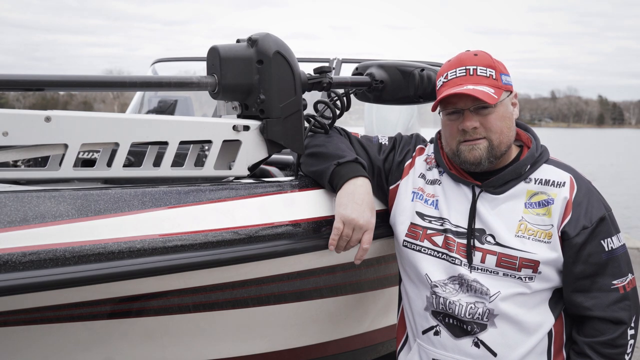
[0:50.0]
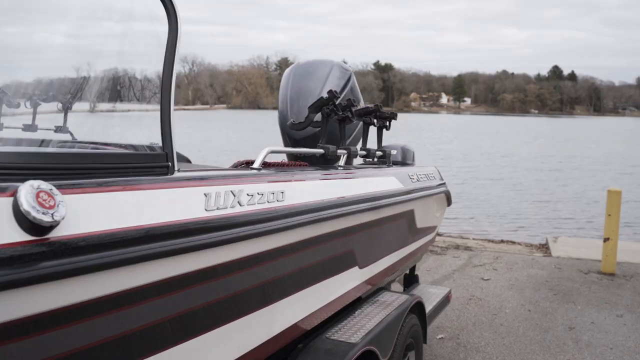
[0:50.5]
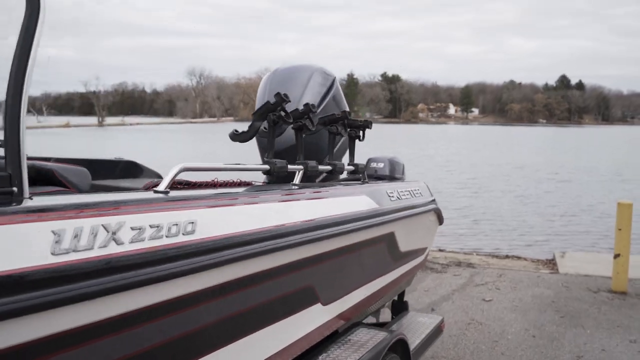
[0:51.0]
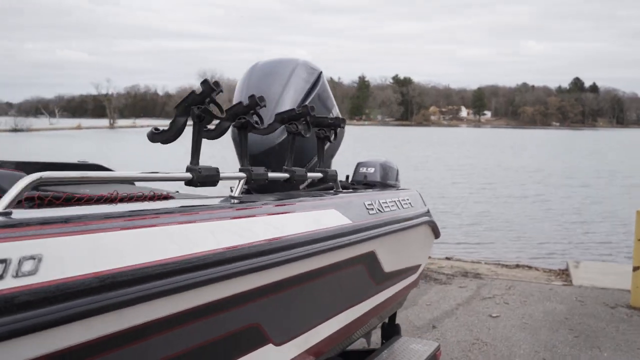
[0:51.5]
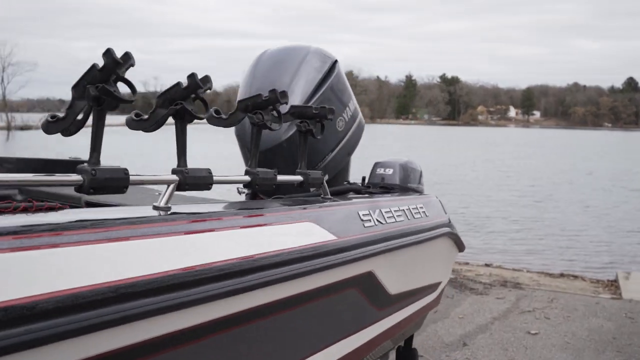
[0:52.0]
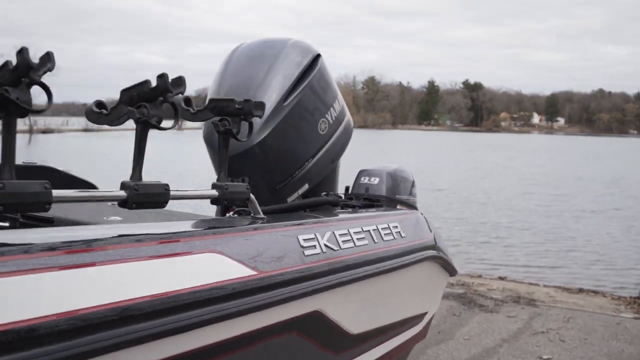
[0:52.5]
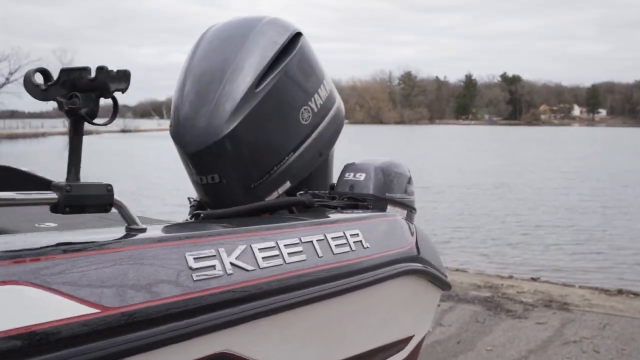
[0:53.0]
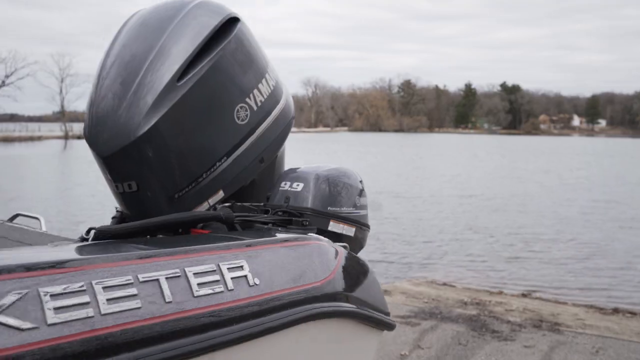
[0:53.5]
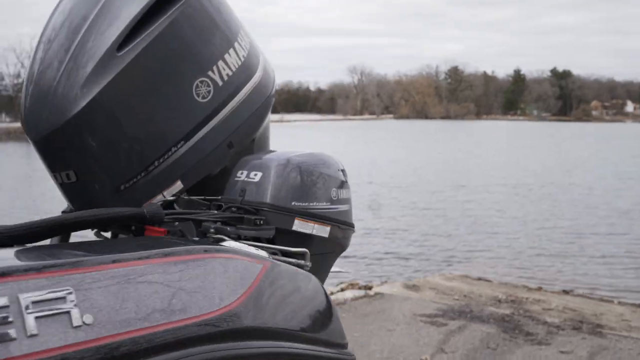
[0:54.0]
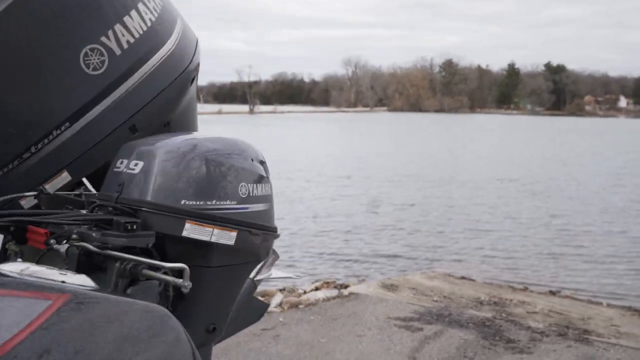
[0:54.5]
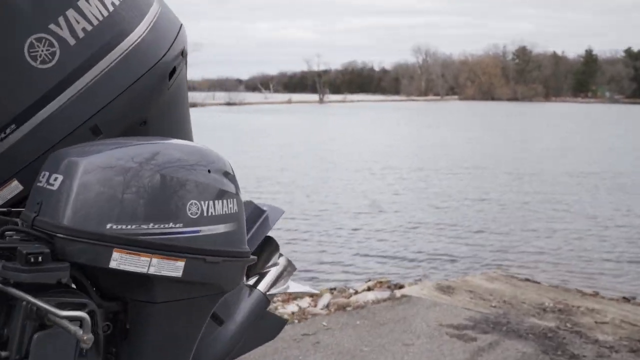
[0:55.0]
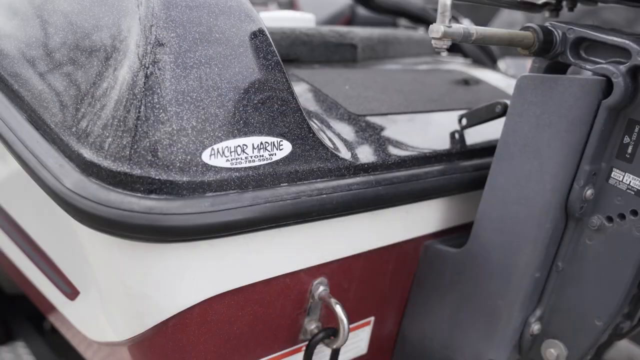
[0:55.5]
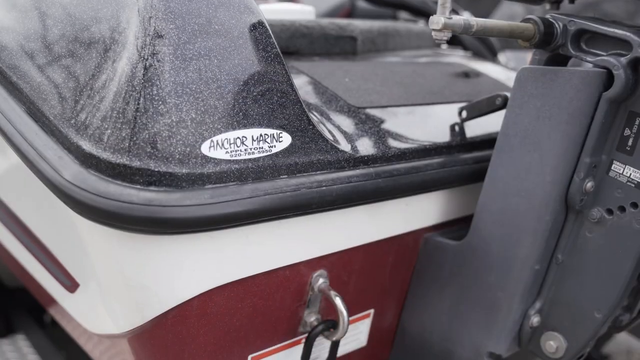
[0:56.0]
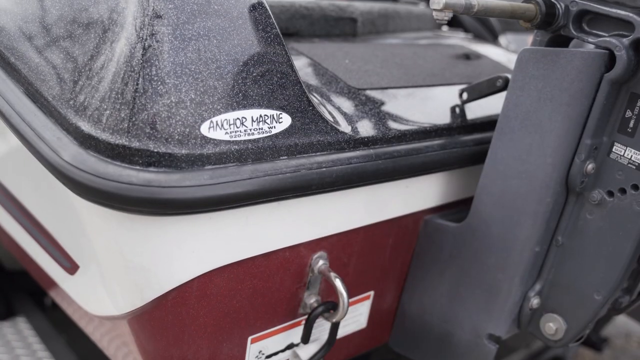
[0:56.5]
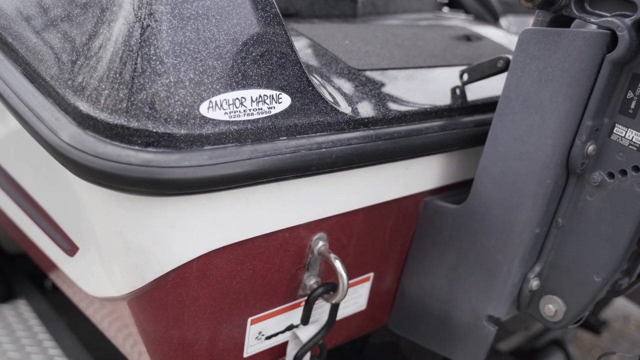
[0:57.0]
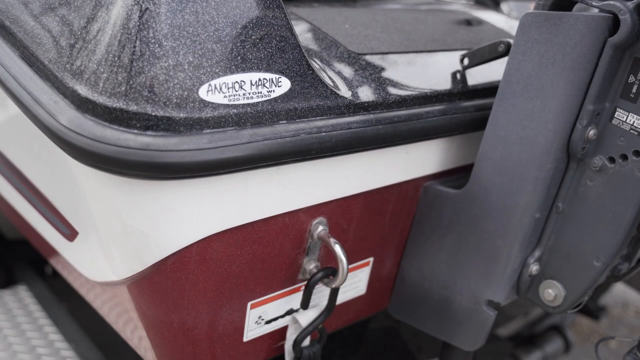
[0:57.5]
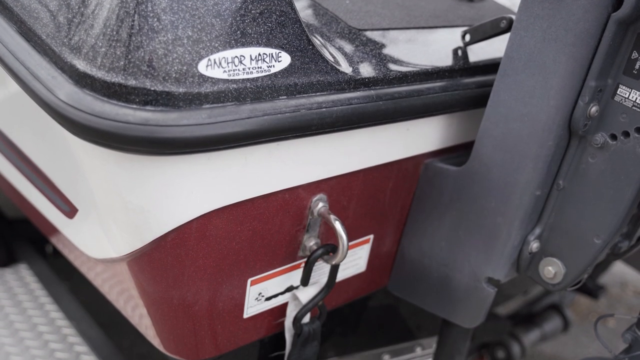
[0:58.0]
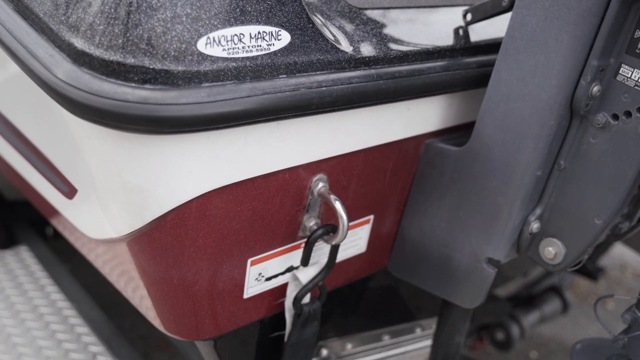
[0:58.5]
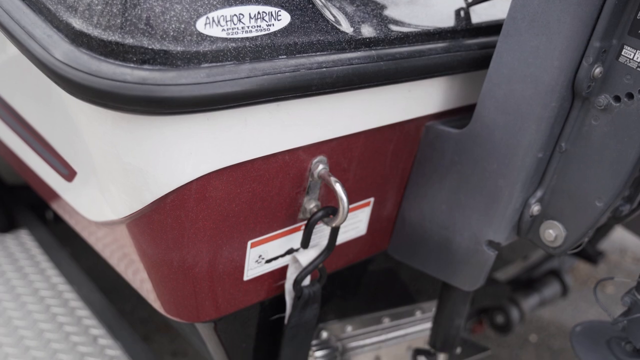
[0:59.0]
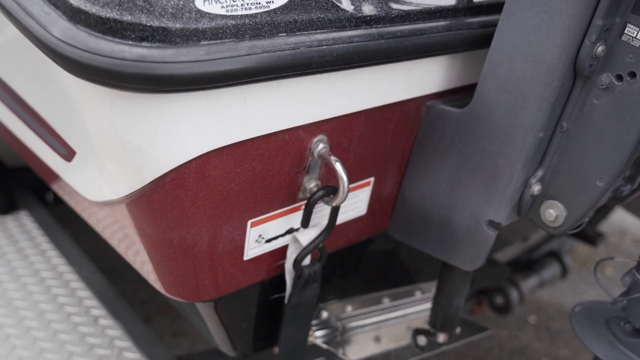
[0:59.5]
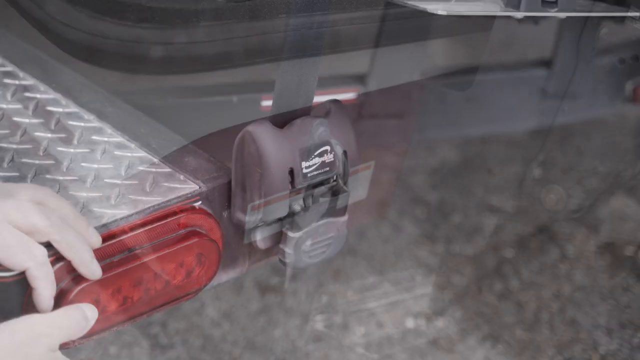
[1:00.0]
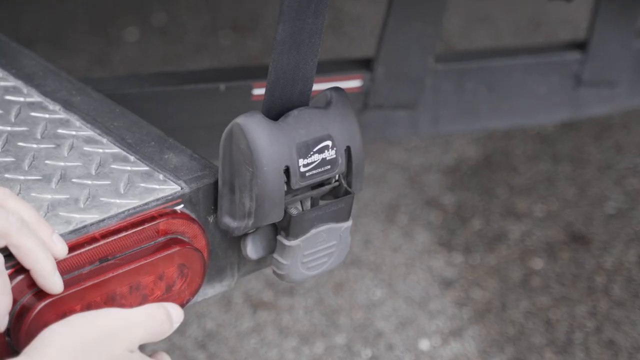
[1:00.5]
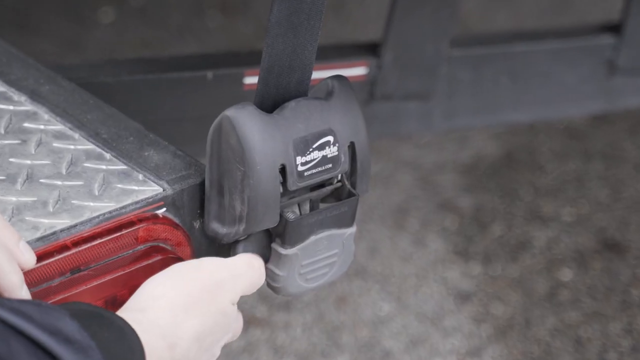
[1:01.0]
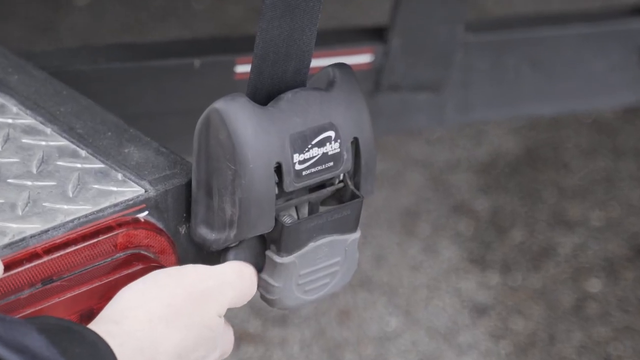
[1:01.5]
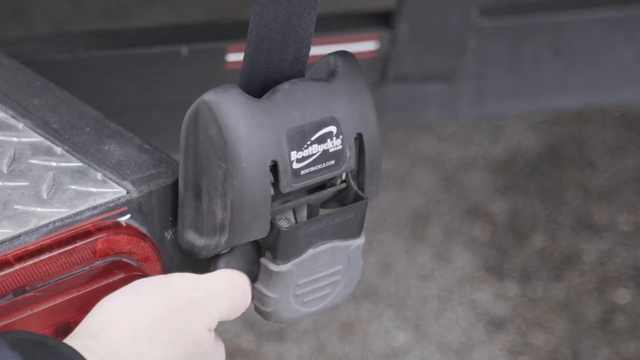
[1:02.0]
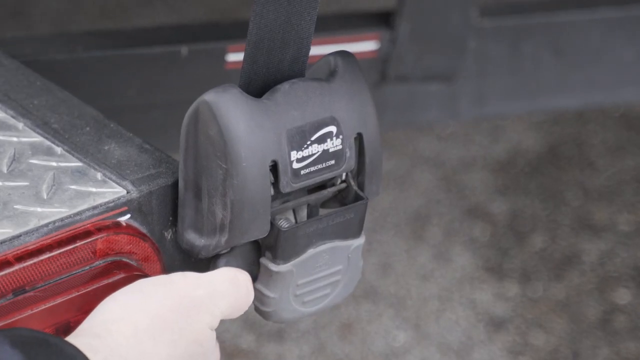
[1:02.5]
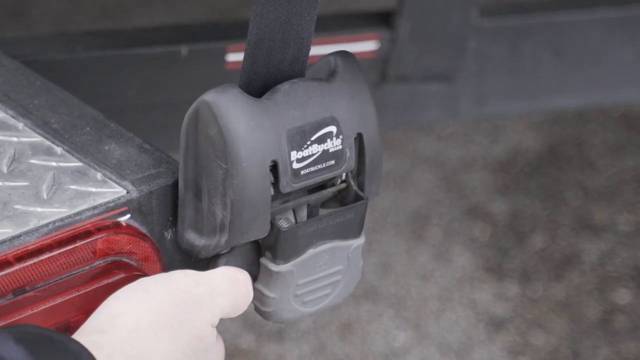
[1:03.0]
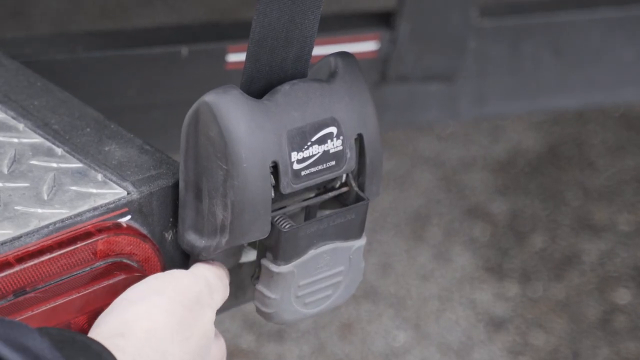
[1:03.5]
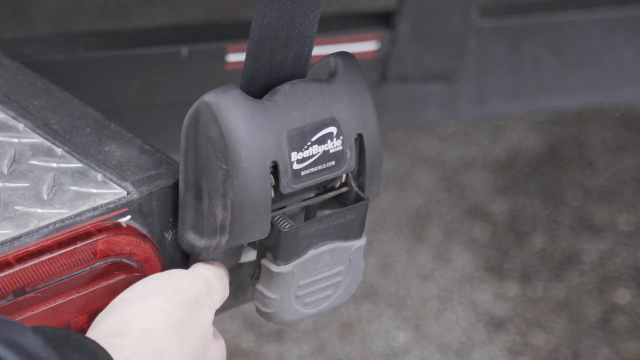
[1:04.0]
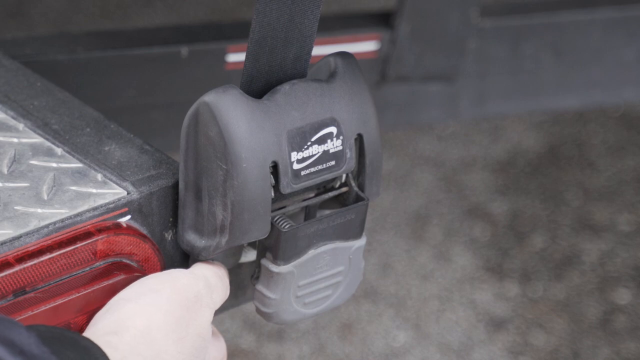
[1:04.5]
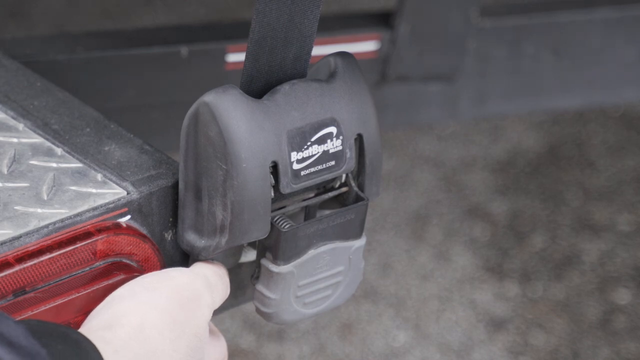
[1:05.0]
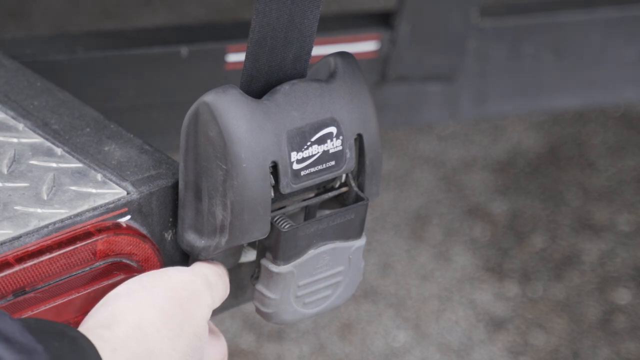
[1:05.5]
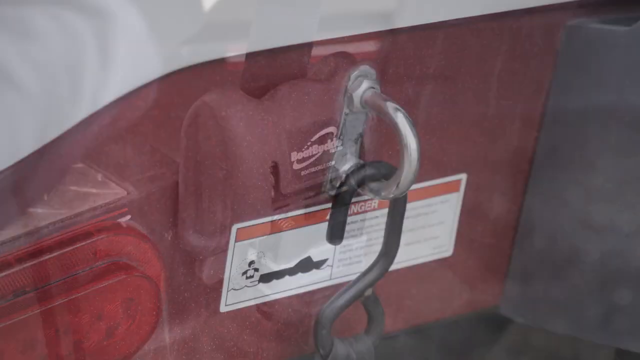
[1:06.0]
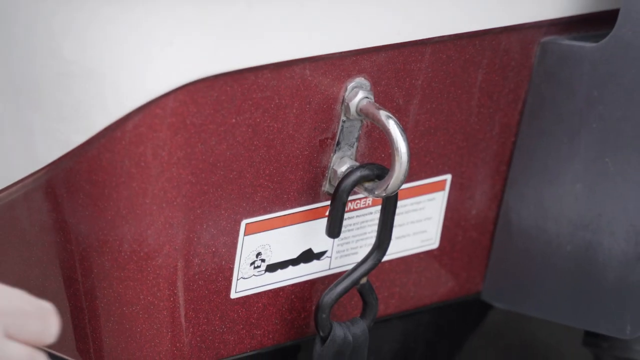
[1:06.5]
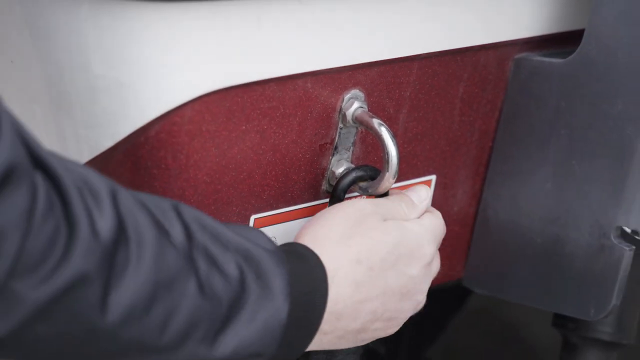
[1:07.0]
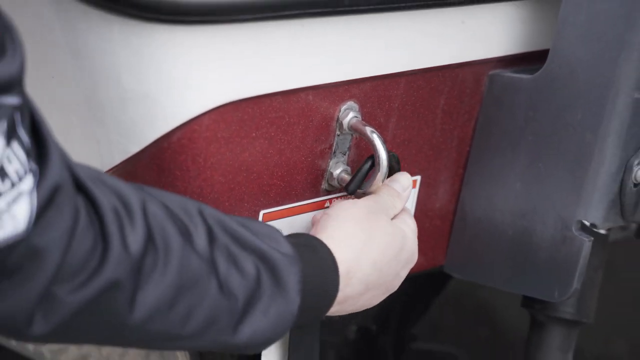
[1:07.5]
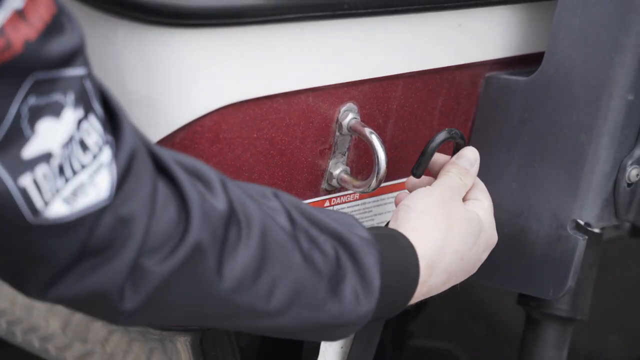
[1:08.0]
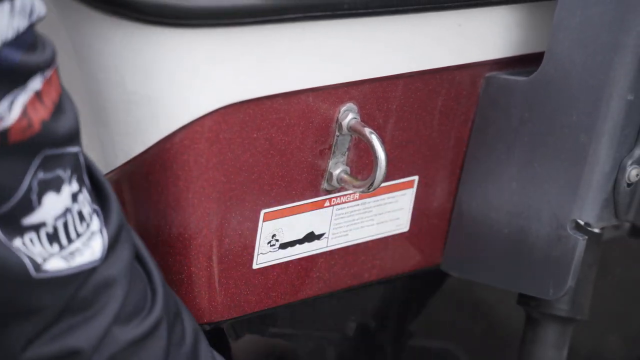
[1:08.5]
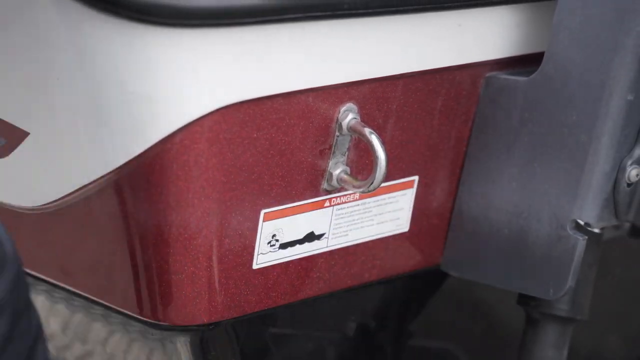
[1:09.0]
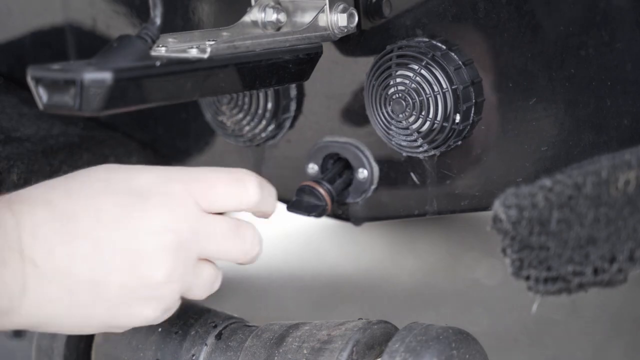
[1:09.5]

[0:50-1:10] The man stands right next to the boat and walks toward the back of it. The Skeeter logo is on the back corner of the boat, and the safety straps are still hooked onto the back. He reaches down and flips a lever, a little button, on one of the straps holding the safety hook, which loosens the strap. He then reaches up and unhooks the hook from the coupling on the back of the boat that holds it onto the trailer. His clothes carry Skeeter branding.